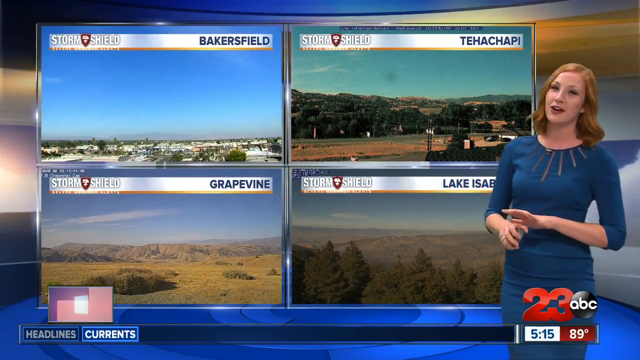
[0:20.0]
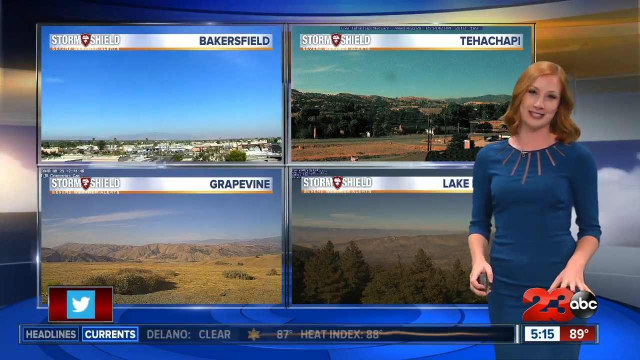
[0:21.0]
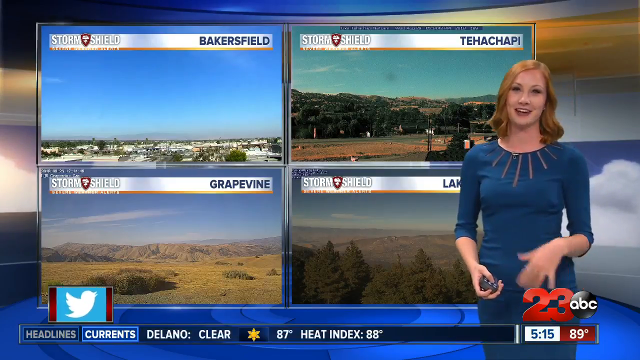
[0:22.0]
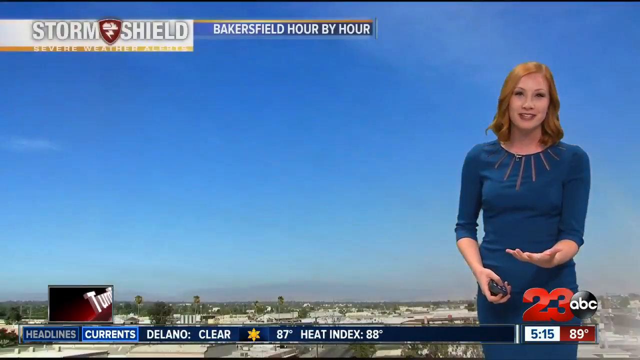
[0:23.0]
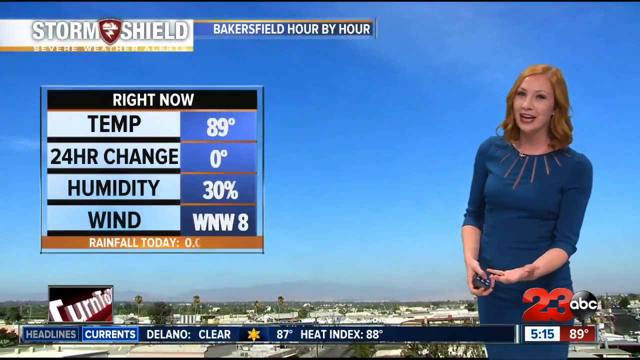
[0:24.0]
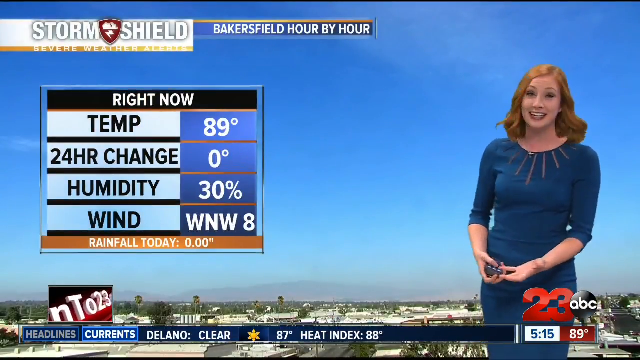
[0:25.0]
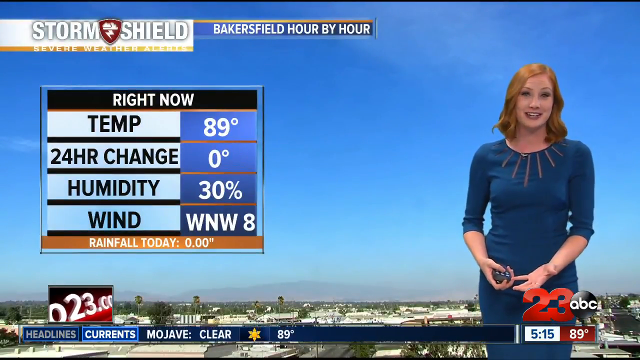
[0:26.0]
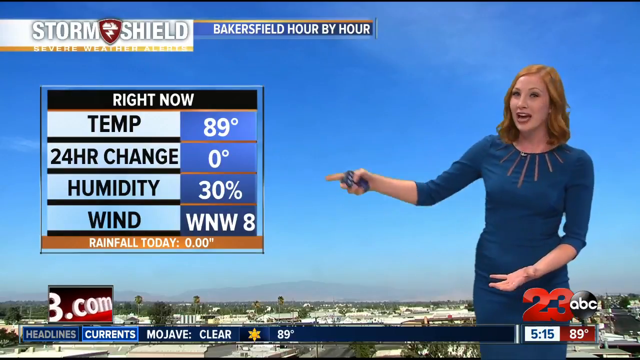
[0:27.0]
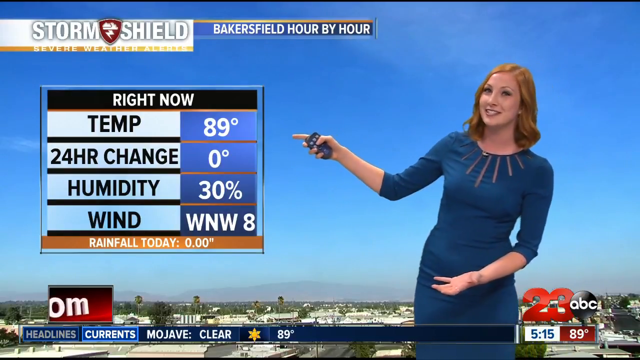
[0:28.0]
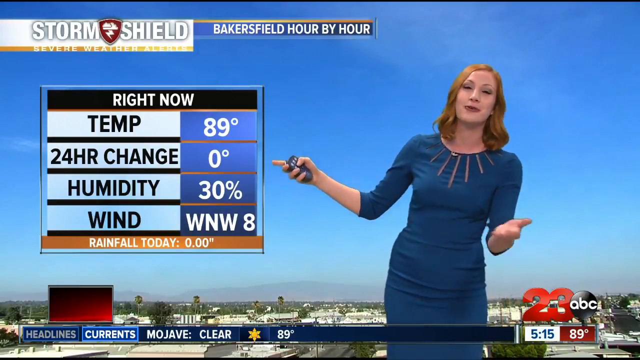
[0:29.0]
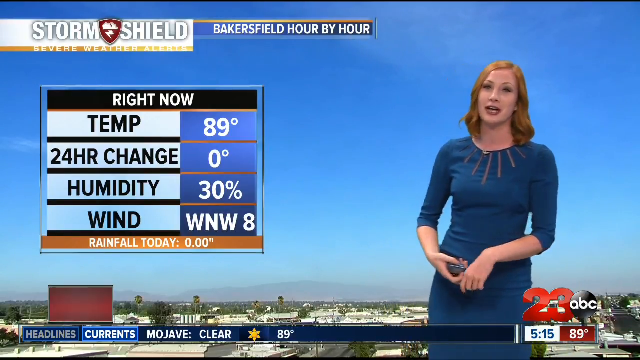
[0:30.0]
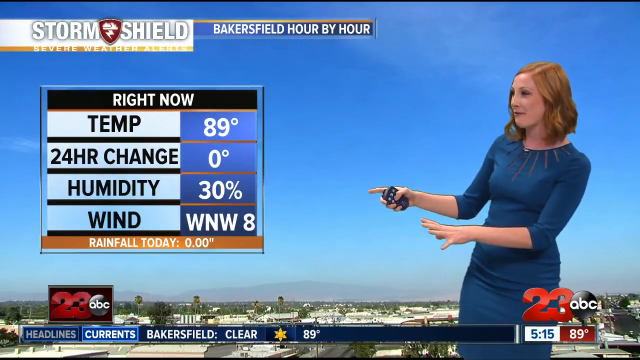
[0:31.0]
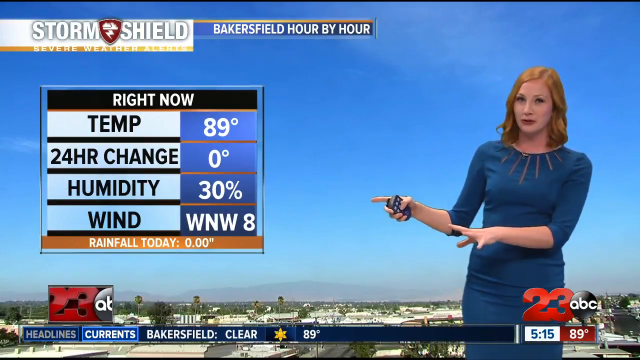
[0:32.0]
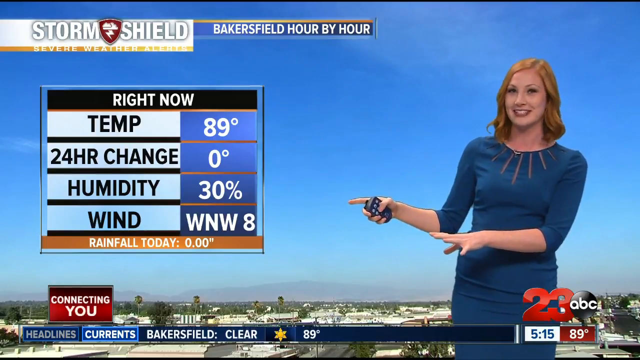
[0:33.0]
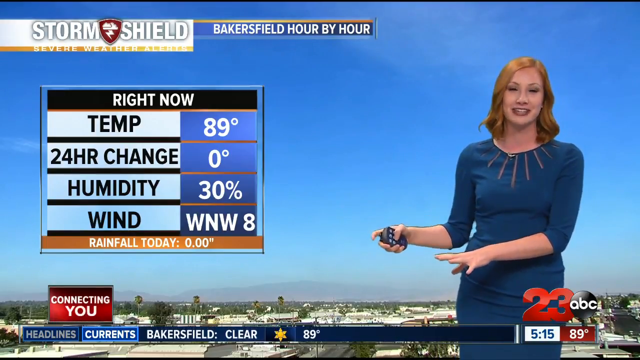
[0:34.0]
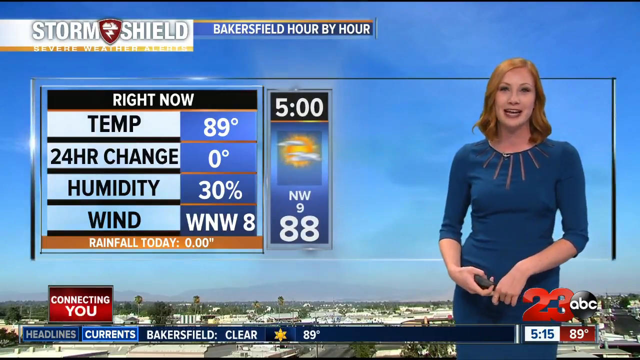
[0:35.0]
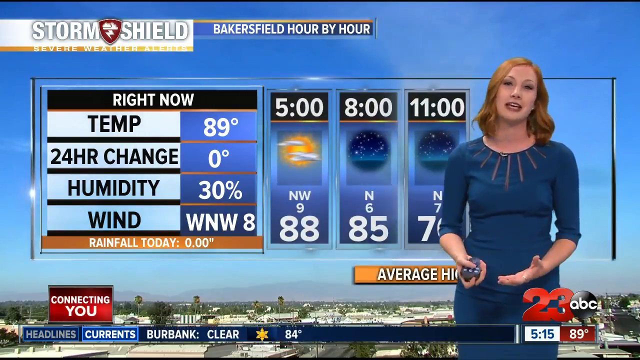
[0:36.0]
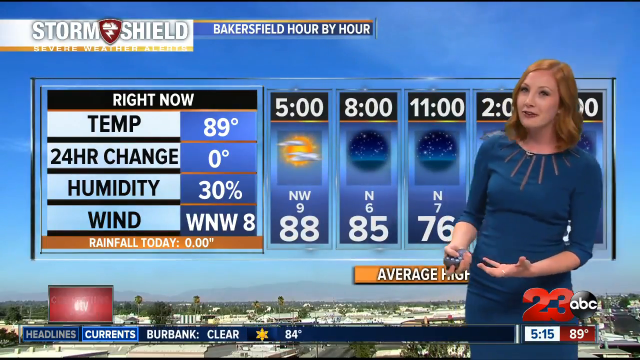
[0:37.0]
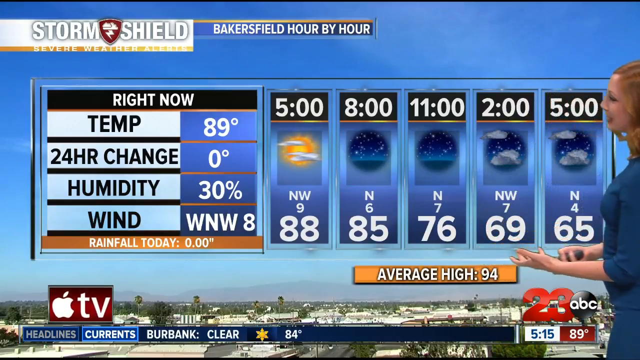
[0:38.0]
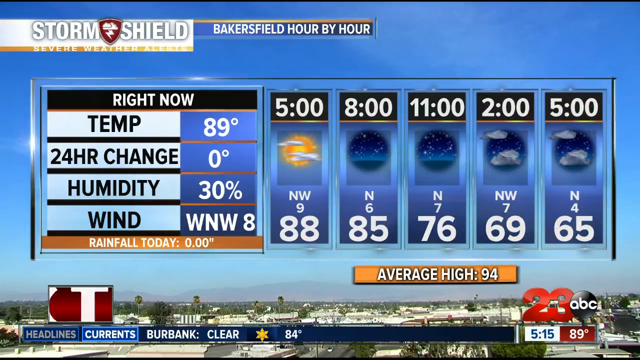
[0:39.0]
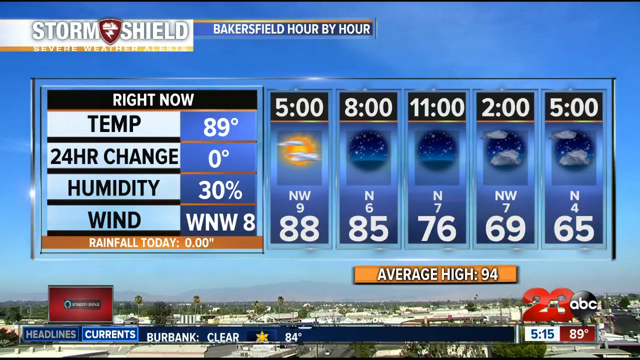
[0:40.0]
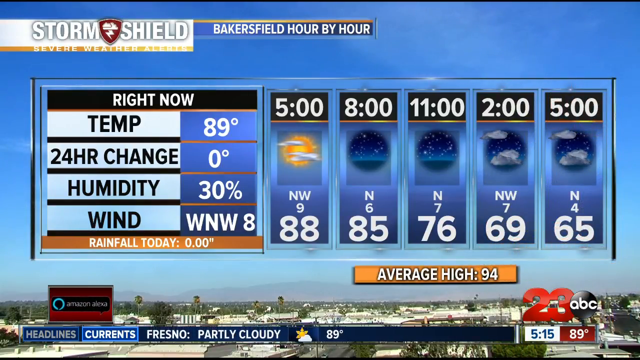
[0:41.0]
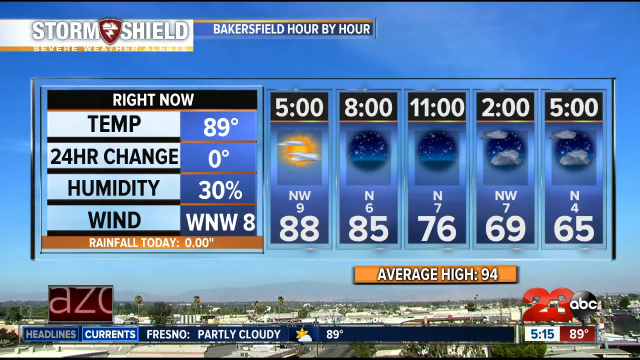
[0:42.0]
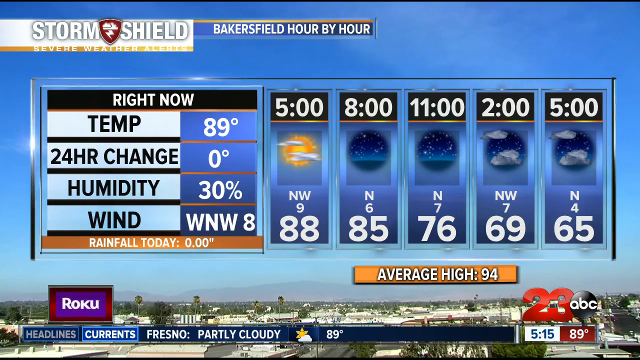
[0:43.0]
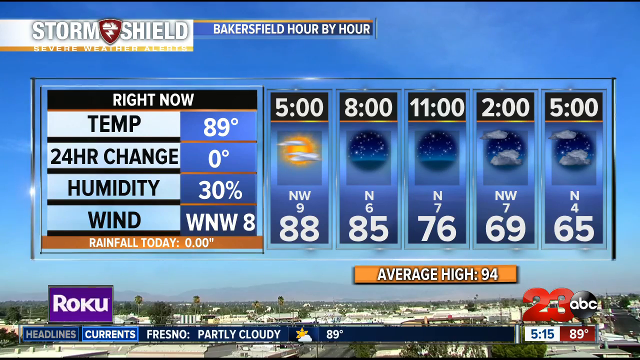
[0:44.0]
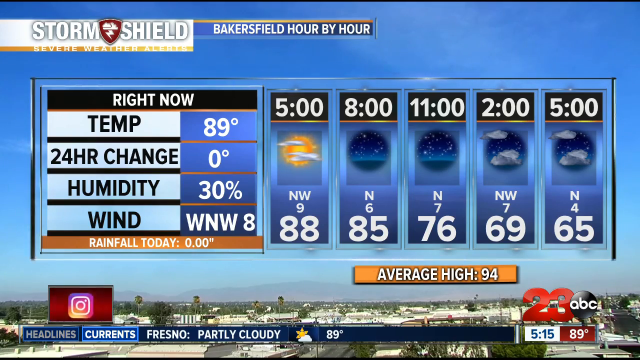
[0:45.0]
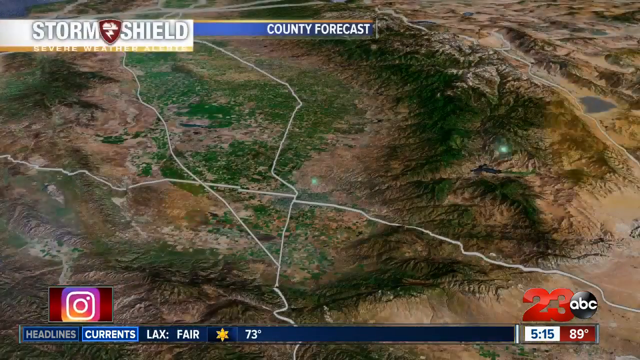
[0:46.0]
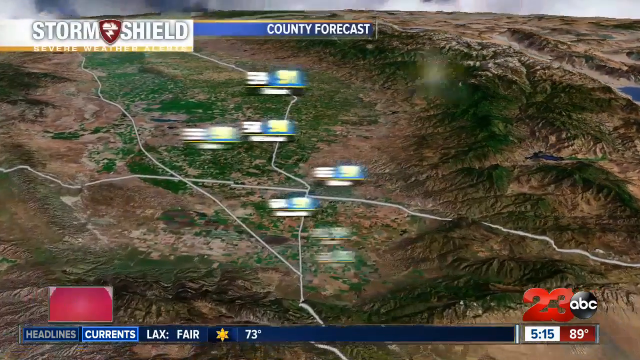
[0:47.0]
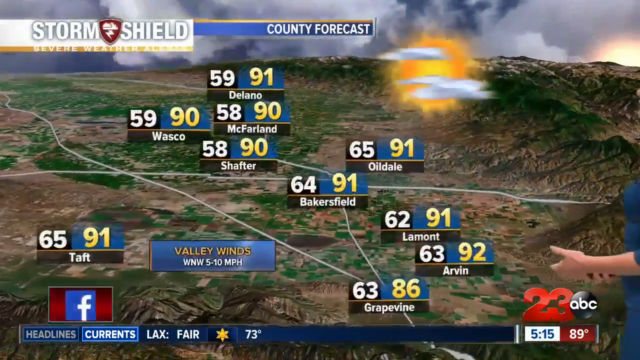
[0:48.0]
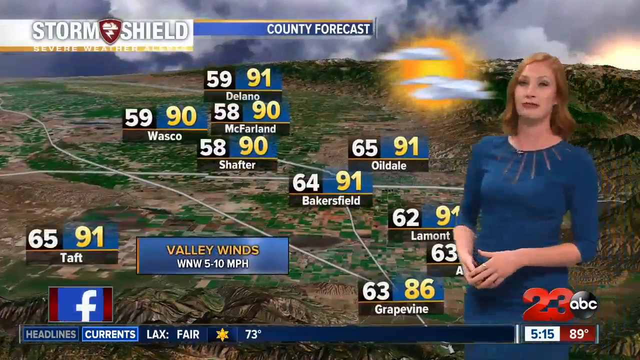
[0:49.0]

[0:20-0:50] A female news reporter with long blonde hair, wearing a blue dress and holding a remote in her right hand, stands next to a big screen showing different pictures of places. She gestures with her hands as she reports about the Storm Shield. The display changes to show the Storm Shield for Bakersfield hour by hour, with temperature, 24-hour change, humidity and wind. She keeps pointing at the screen as the display continues to change. She moves away from the screen, out of sight, and the display changes to show different cities, with numbers, names of locations and green vegetation. The screen keeps changing, showing different places with different weather conditions.